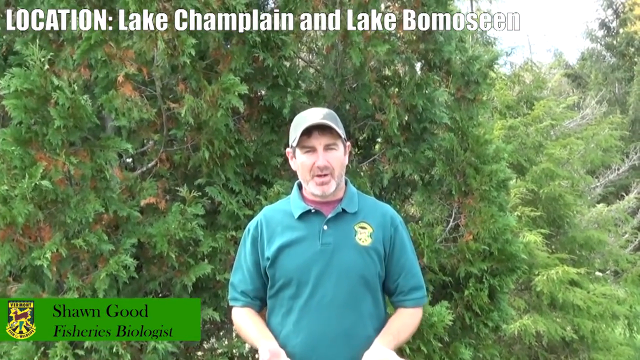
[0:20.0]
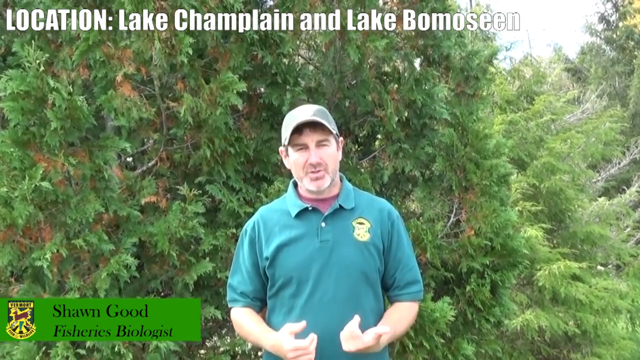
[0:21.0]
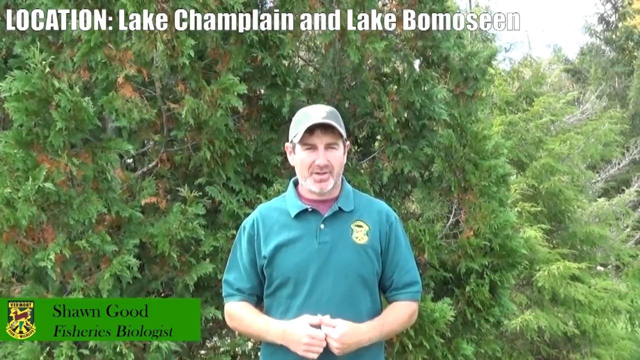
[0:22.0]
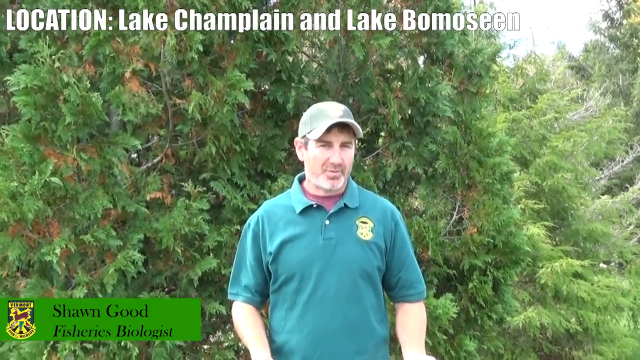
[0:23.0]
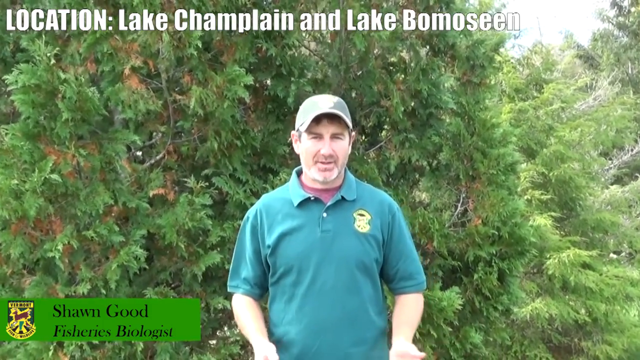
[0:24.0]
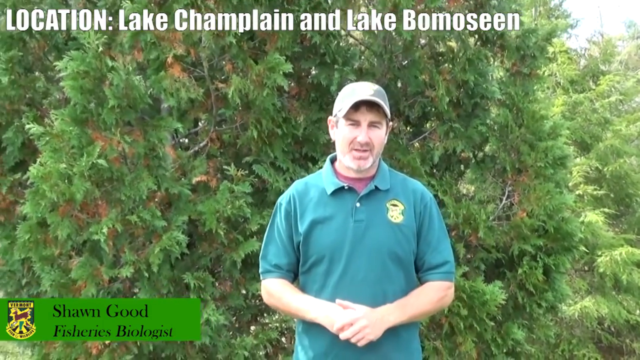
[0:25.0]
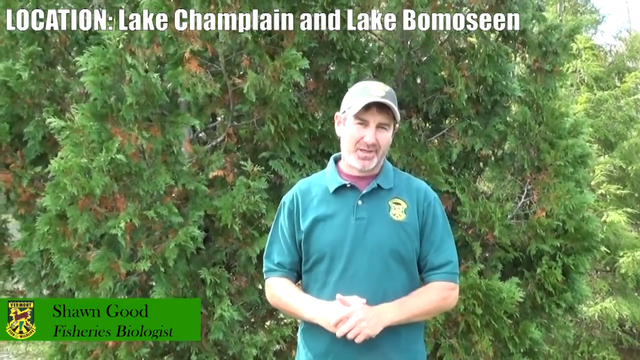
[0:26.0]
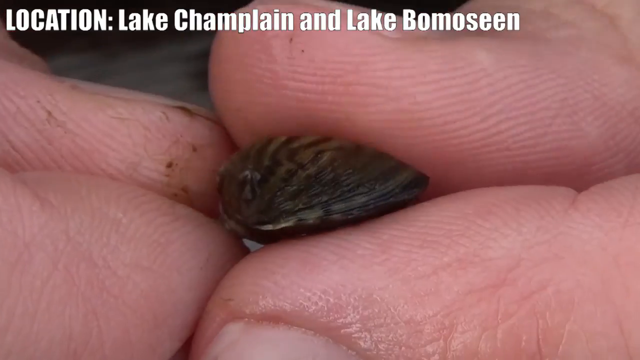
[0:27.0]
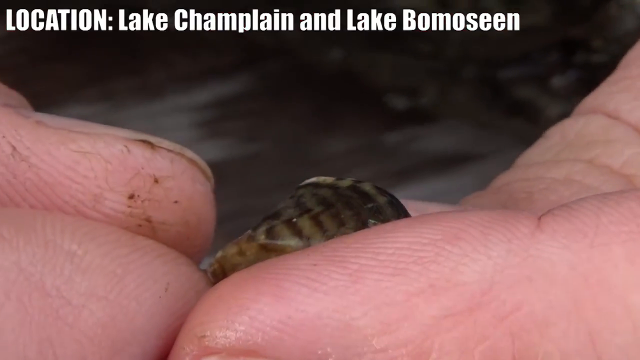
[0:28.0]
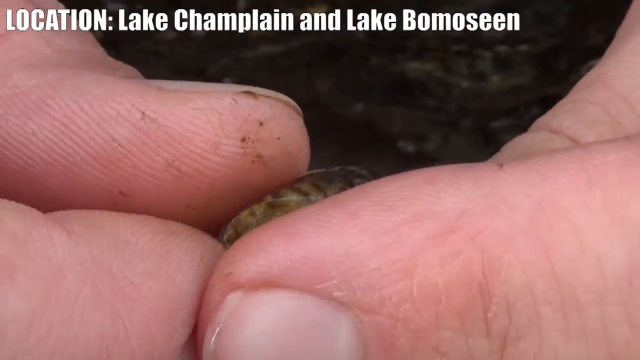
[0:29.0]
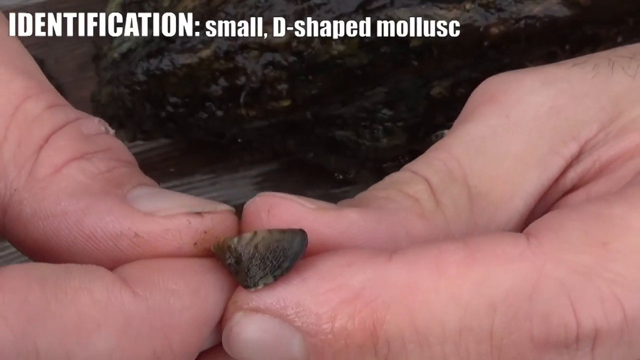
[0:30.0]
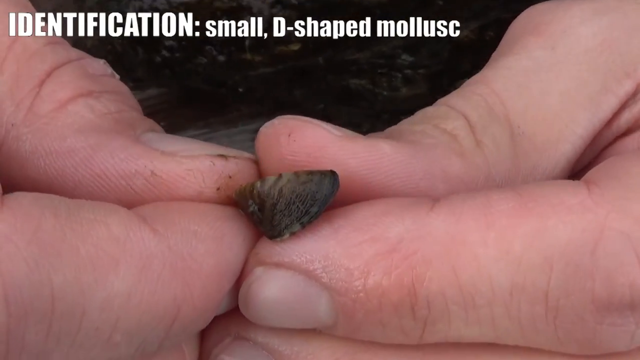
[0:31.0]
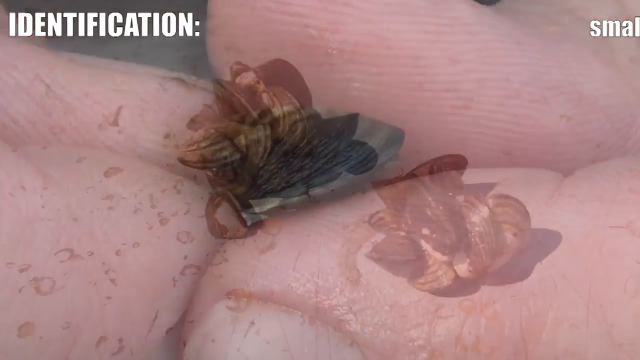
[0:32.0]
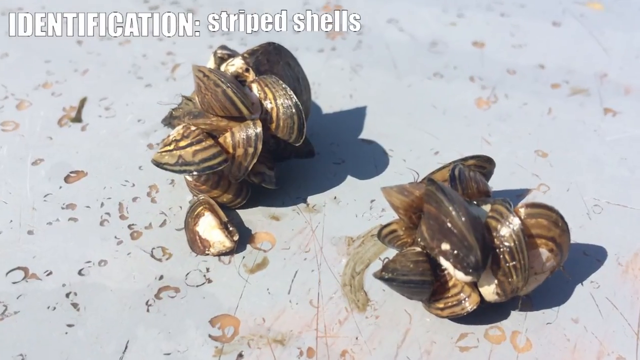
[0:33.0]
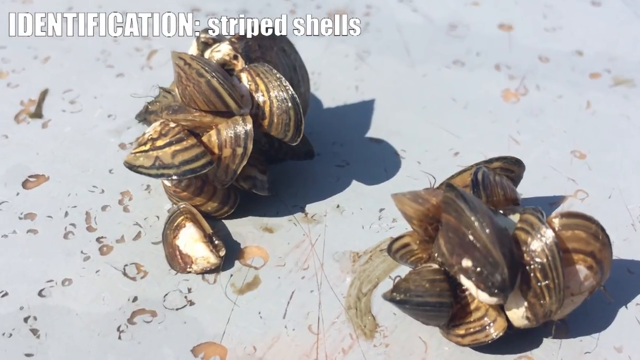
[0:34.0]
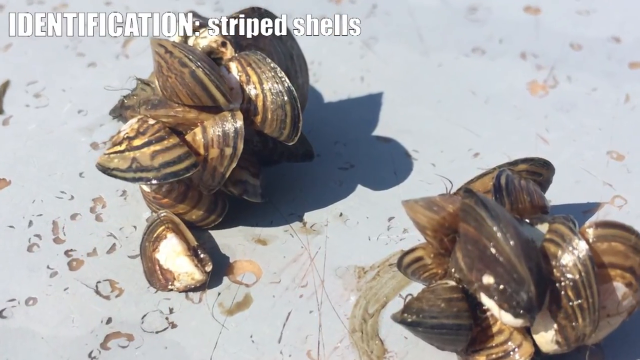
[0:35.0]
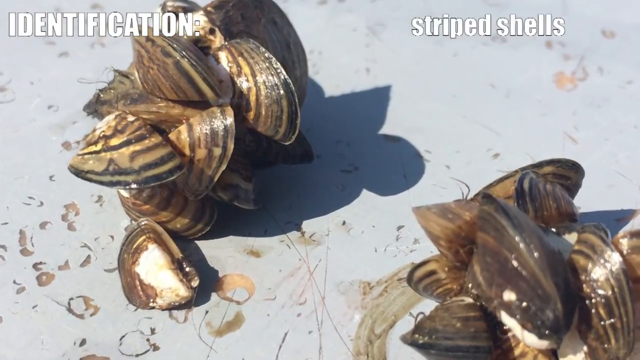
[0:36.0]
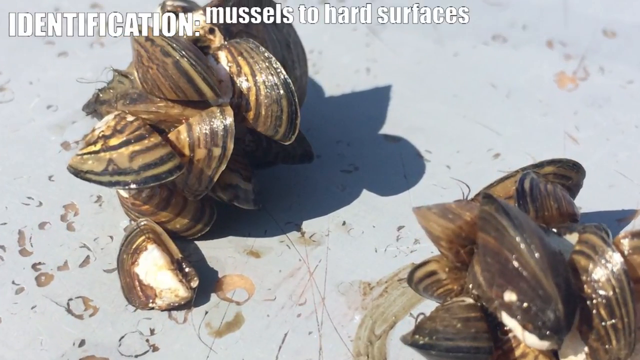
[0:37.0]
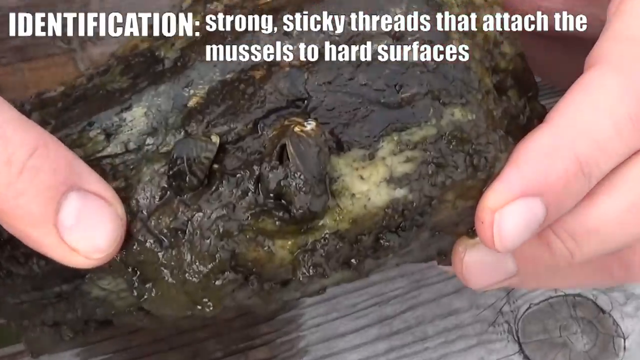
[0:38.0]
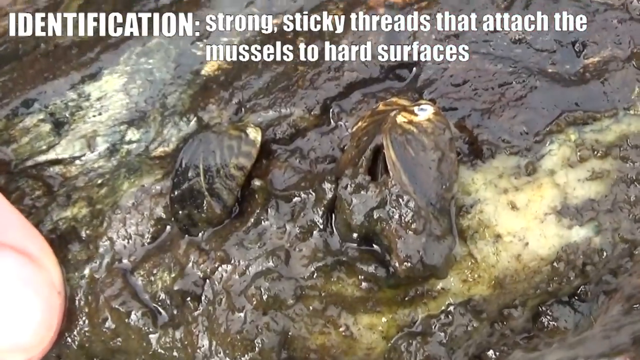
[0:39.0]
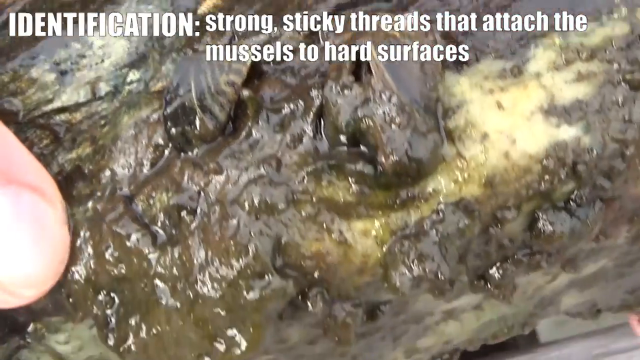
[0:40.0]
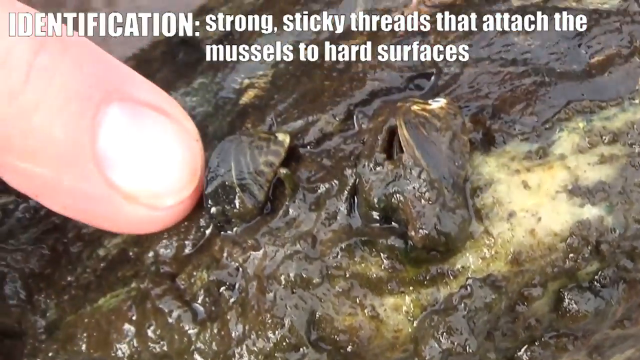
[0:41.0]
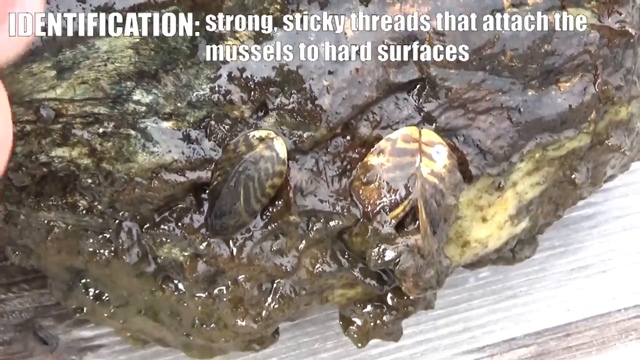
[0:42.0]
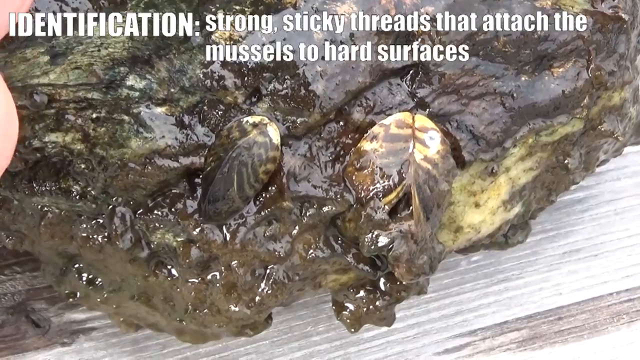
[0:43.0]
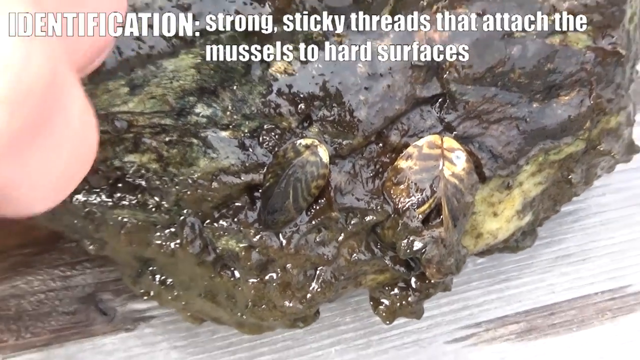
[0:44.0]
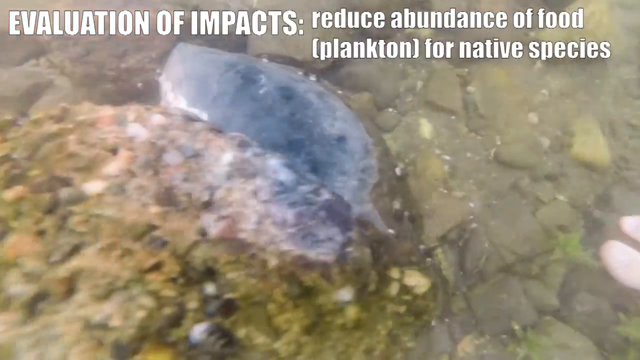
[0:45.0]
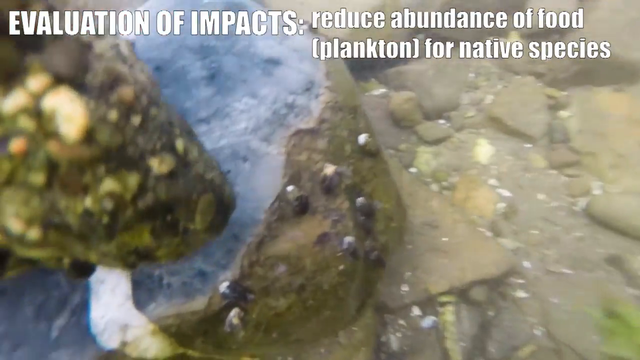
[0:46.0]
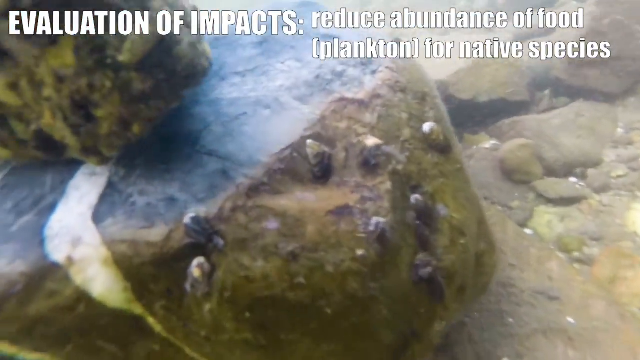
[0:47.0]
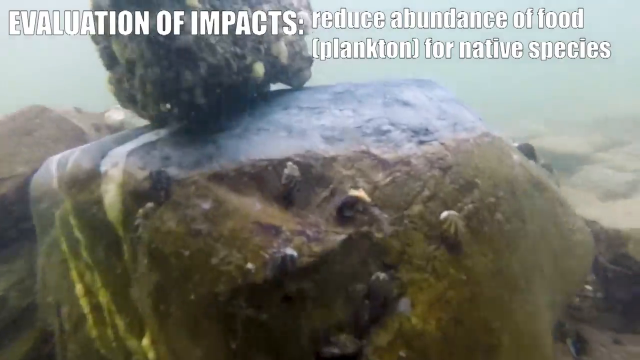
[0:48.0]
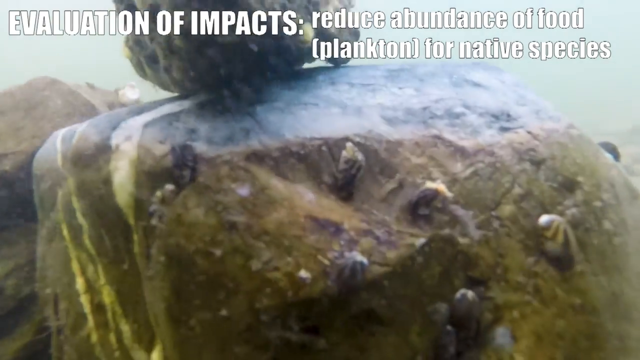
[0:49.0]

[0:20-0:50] A man in a maroon shirt appears, with the name Sean Good in the lower left corner and "fisheries biologist" beneath it. To the left of the name is a patch showing a white-tailed deer. White letters across the top center and left read "Location, Lake Champlain, and Lake Bomoseen." A close-up then shows Sean holding a zebra mussel in his hand. After that, a cluster of the mussels appears. They are dark and light, look like little oysters, and are about the size of a penny or less.